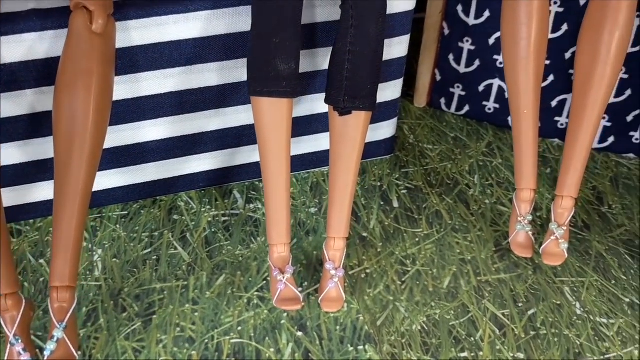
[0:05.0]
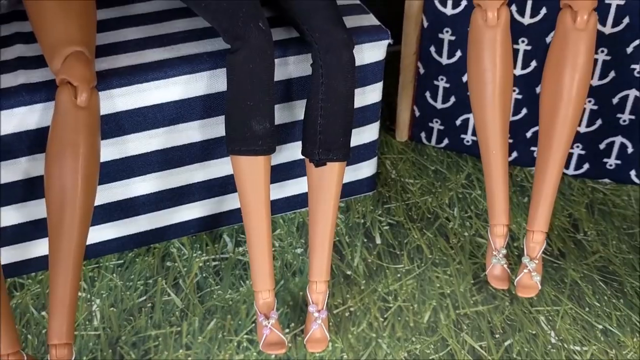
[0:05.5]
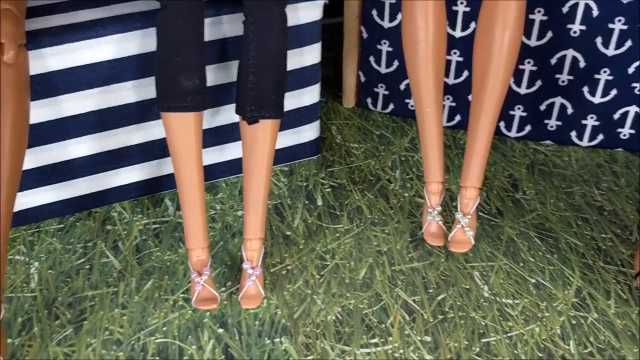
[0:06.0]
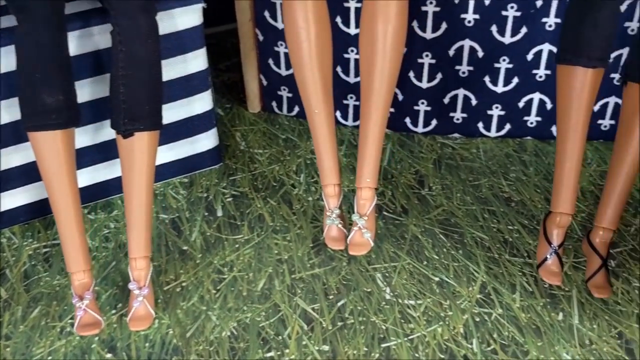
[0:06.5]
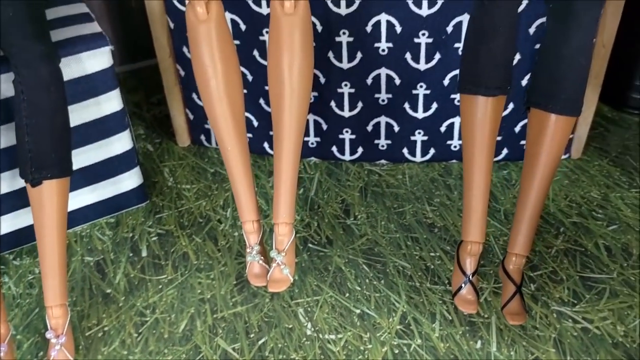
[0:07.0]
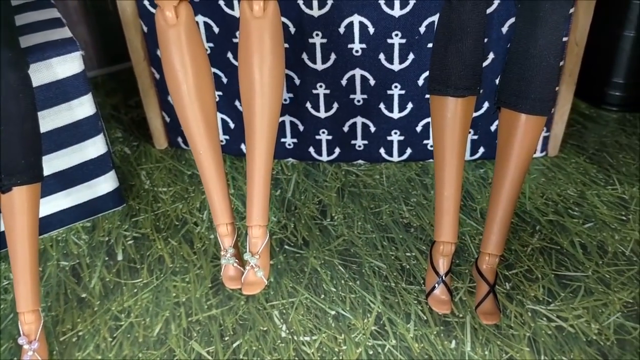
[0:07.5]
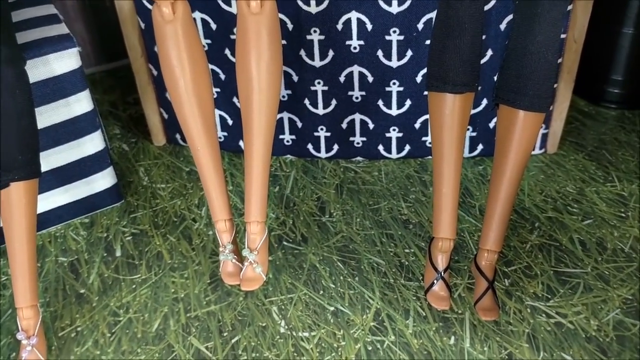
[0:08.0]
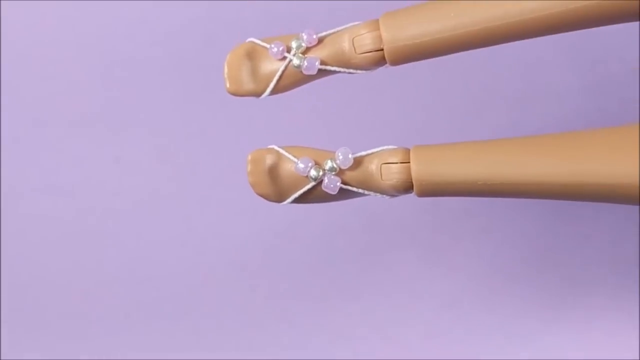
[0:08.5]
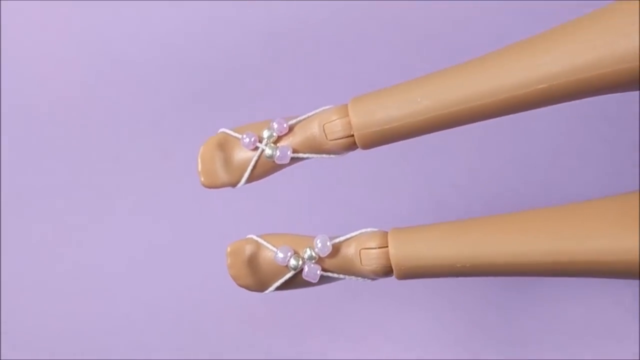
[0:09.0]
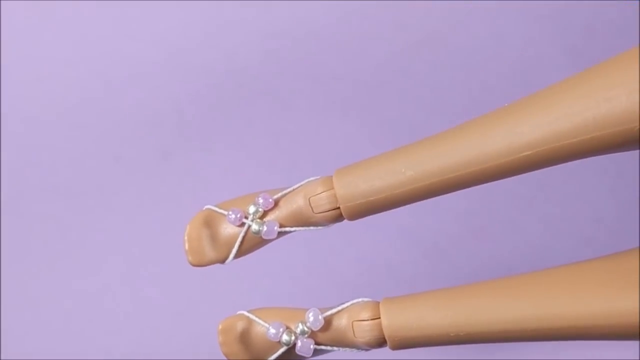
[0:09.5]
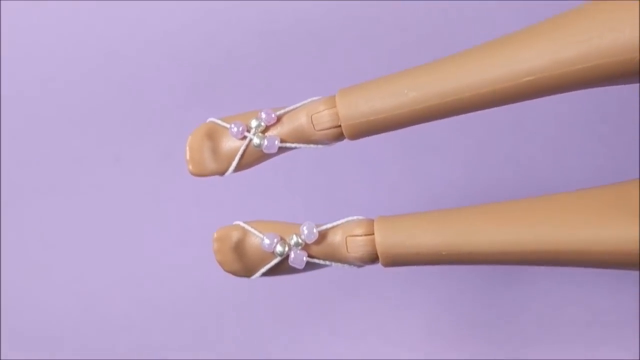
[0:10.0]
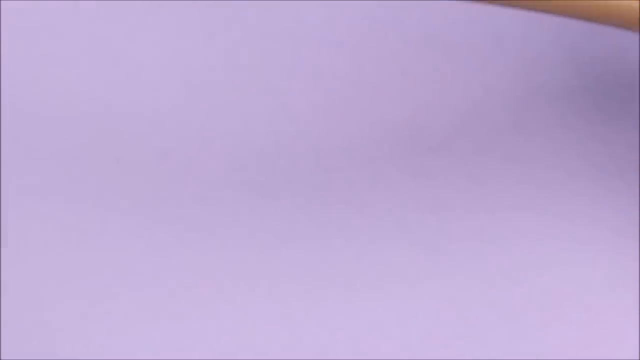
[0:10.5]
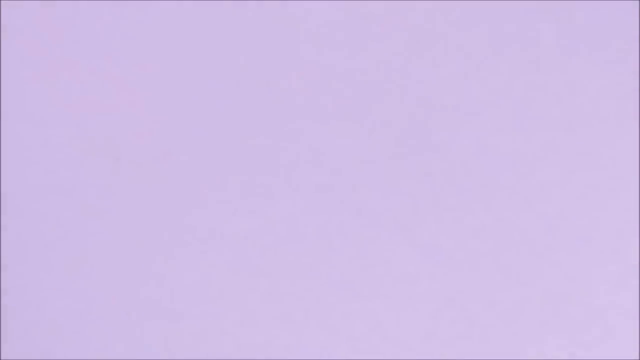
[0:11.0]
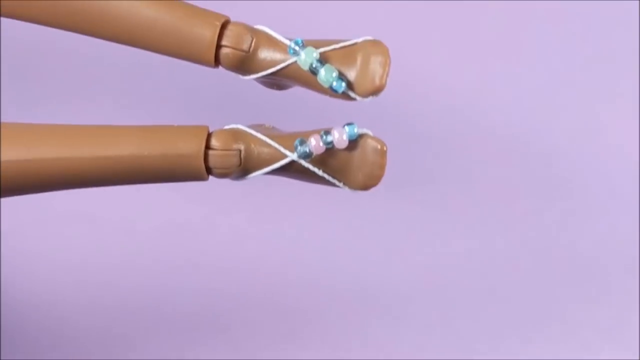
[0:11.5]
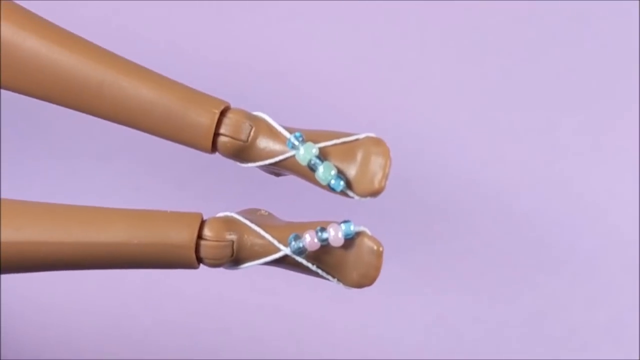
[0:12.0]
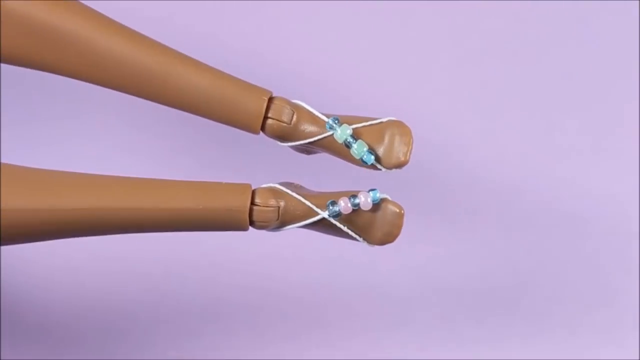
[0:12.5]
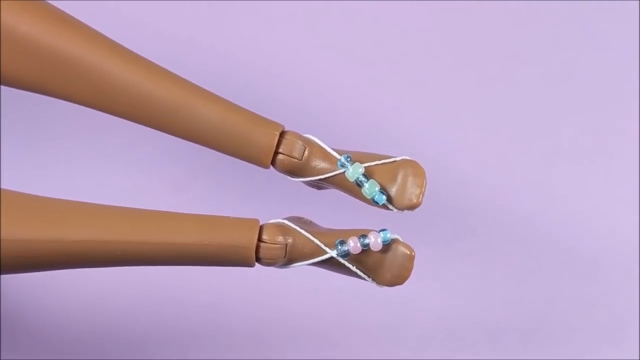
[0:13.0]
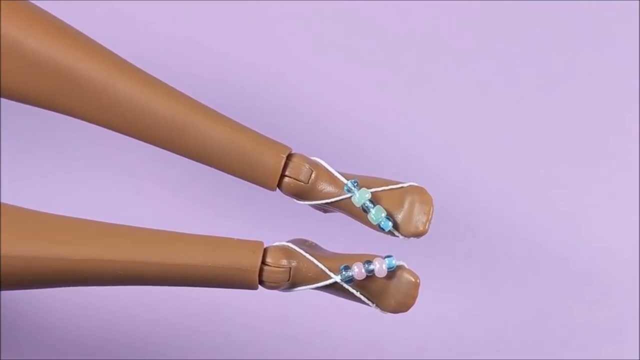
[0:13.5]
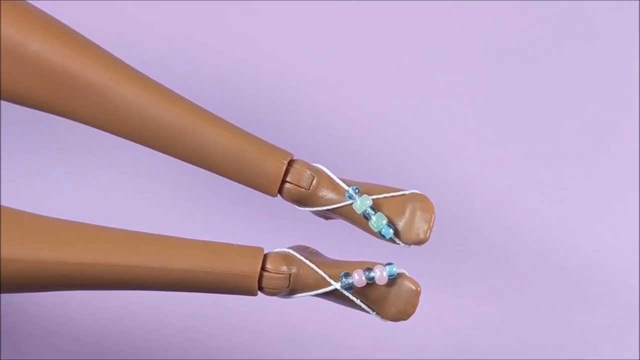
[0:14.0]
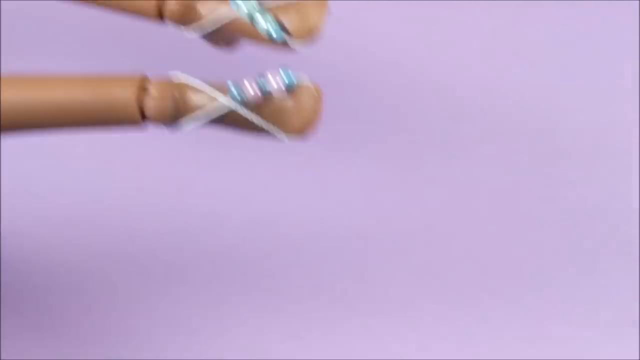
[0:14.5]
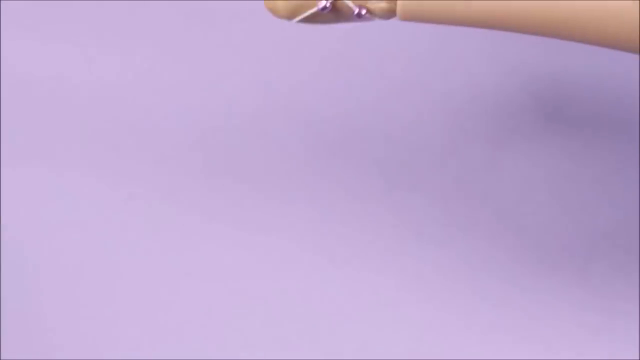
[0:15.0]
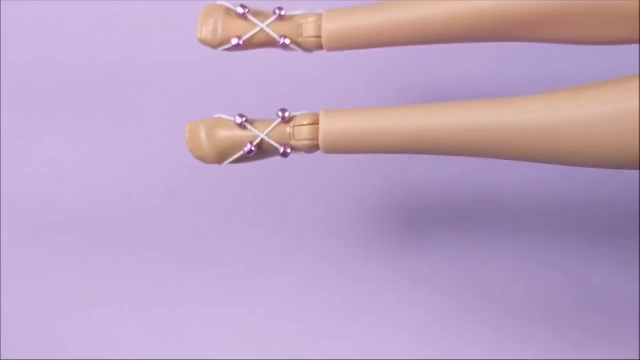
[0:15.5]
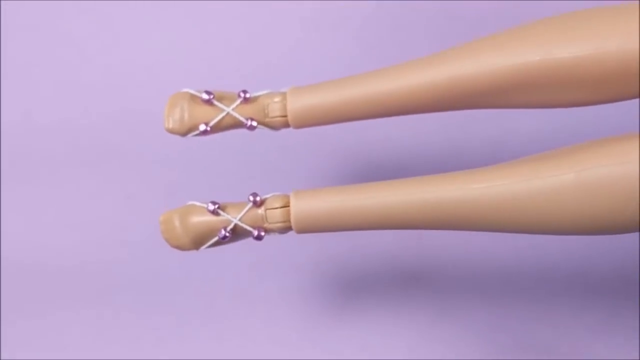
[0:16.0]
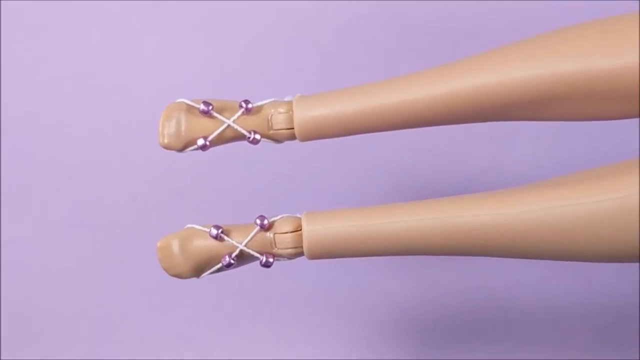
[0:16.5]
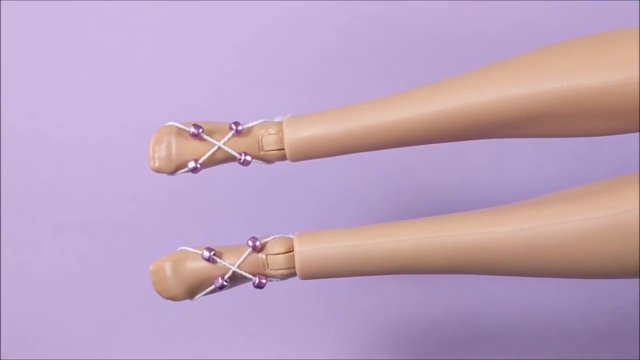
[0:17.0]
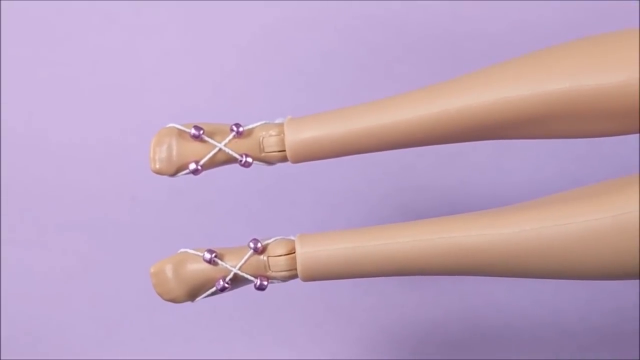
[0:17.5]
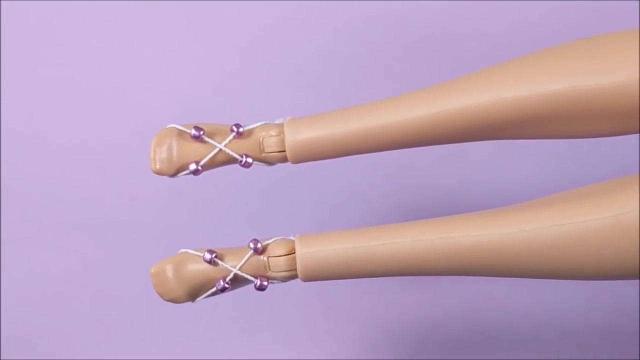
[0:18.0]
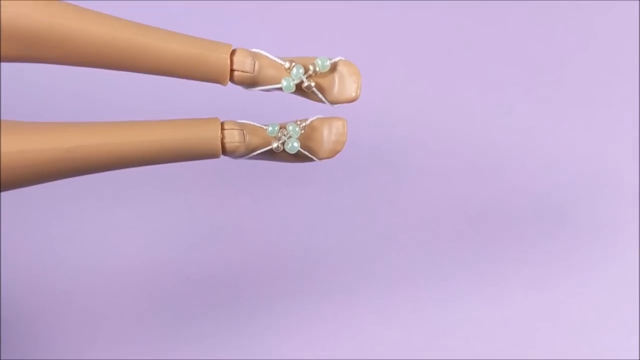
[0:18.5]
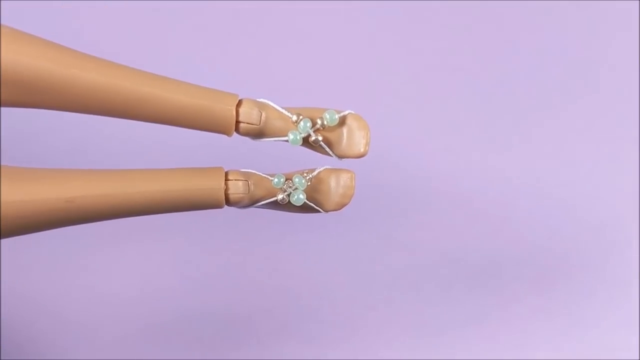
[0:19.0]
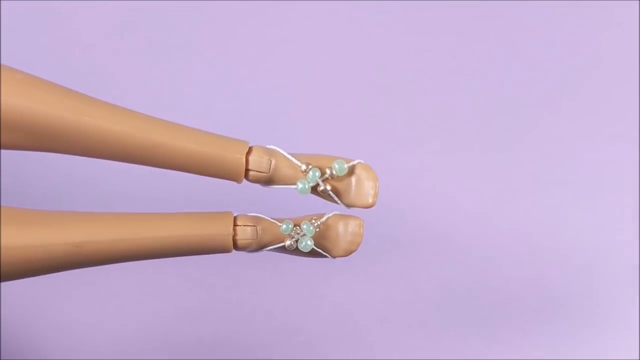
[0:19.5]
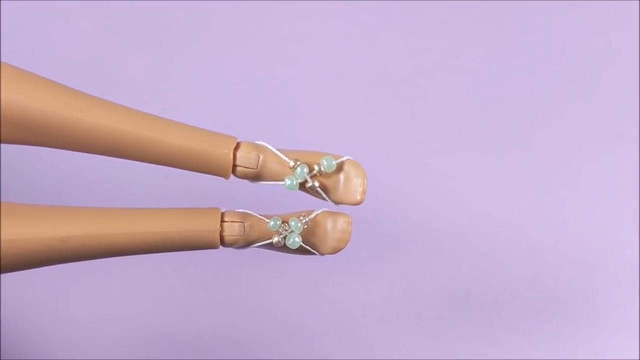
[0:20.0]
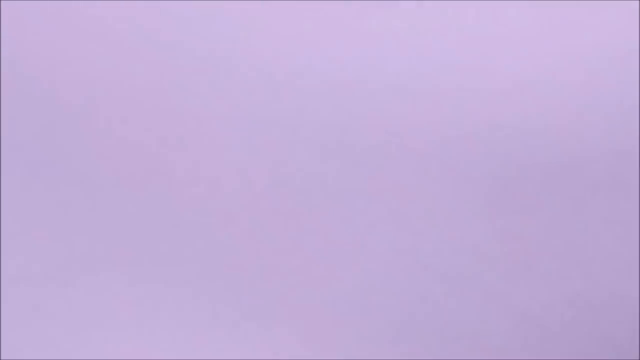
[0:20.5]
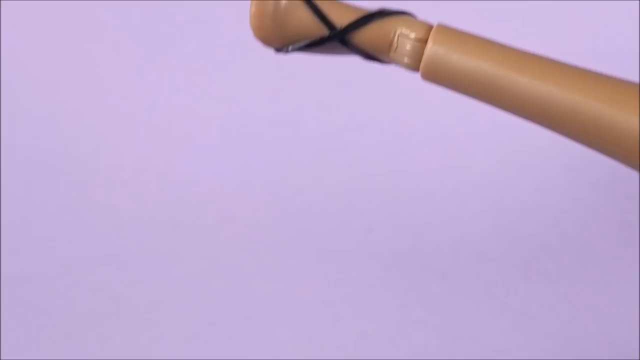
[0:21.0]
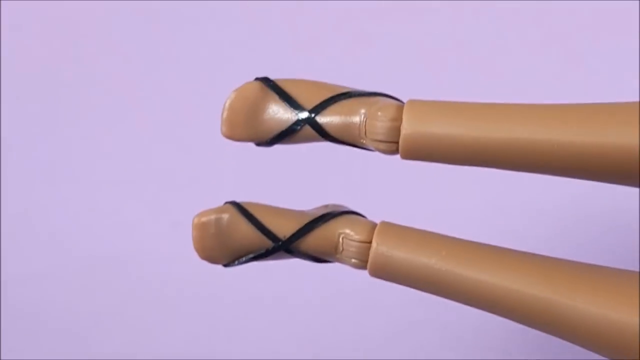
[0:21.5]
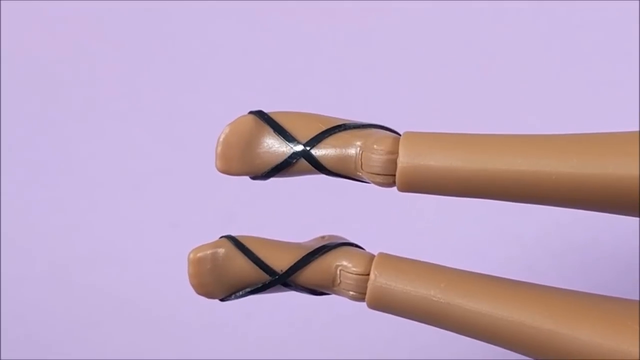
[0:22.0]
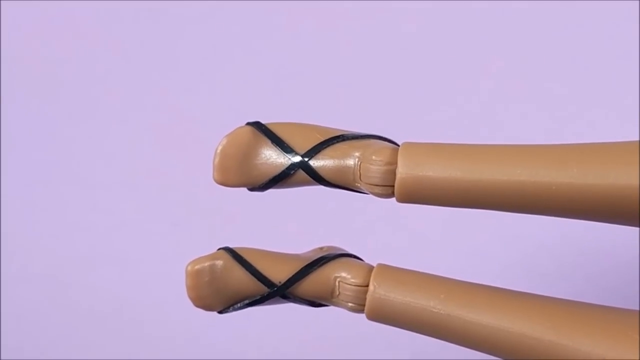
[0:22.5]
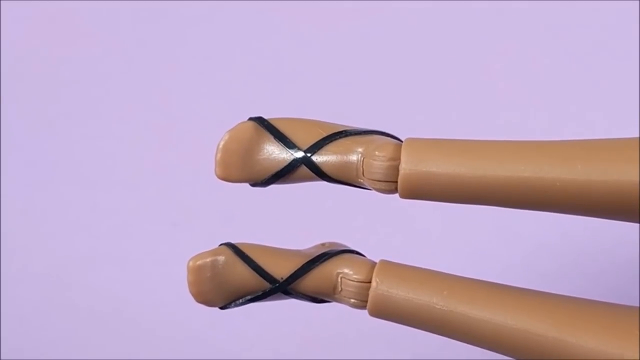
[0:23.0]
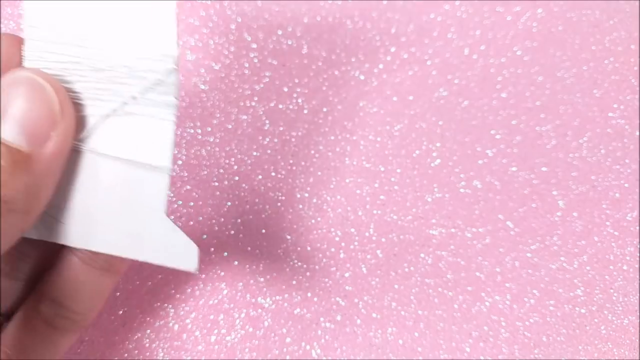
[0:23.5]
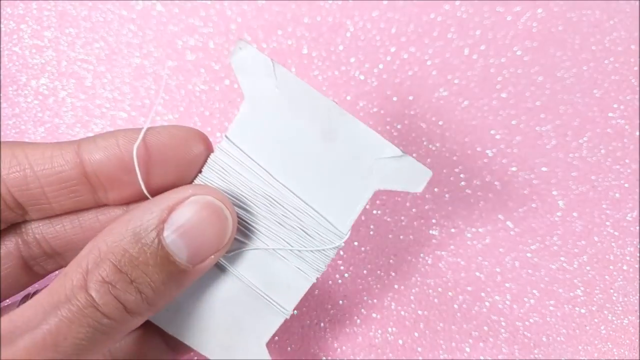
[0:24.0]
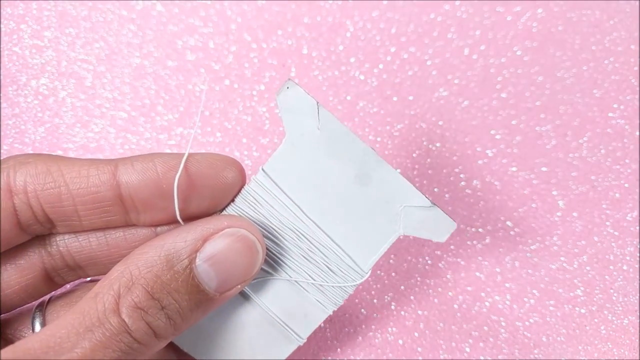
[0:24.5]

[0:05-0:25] White letters at the top read "DIY Miniature Barbie Sandals Barefoot Style". The video shows off the Barbies' sandals and begins to show how they were made for the barefoot Barbies, personalized to each one. Each Barbie has a different kind of sandal; they look like strings and some very thin, very small black electrical tape, with gemstones or little flowers. Some are purple, some look sky blue, one is just black, and one has turquoise in it. They look mostly like probably string and glue.